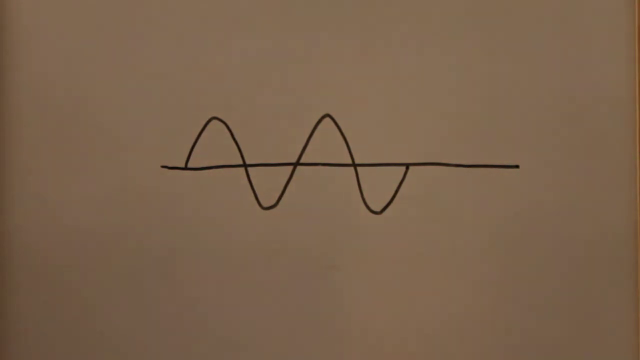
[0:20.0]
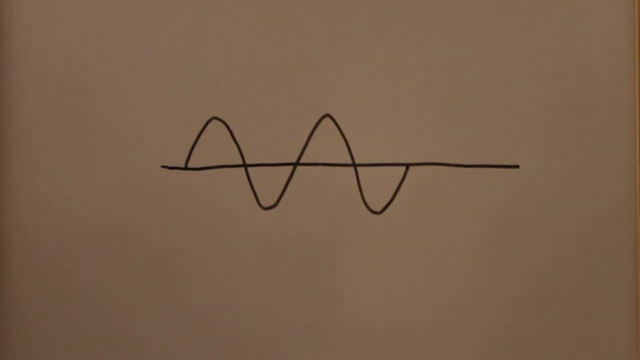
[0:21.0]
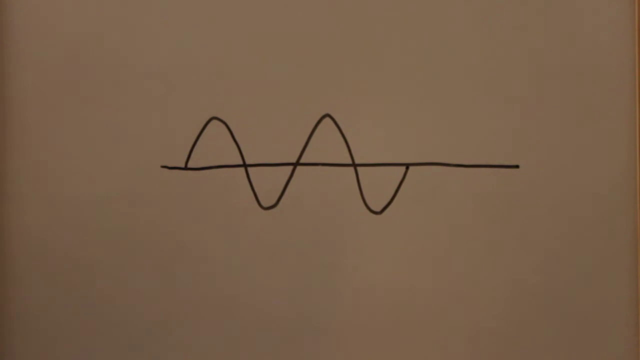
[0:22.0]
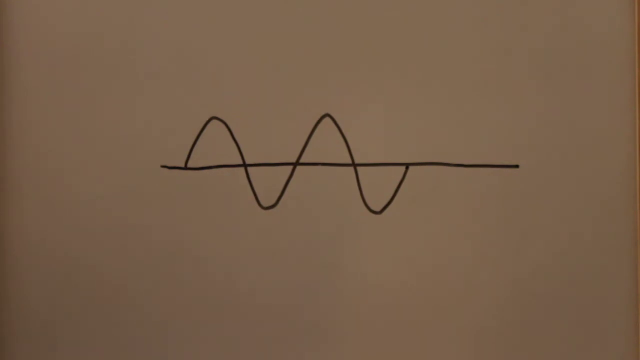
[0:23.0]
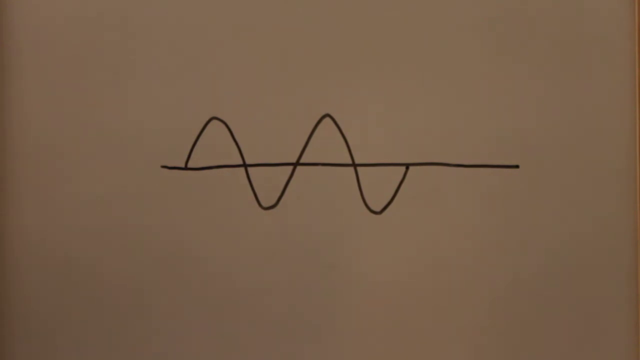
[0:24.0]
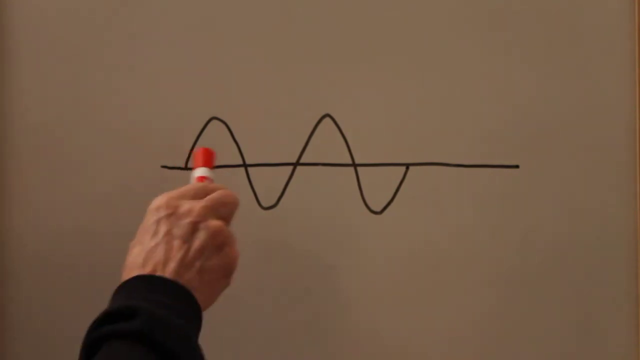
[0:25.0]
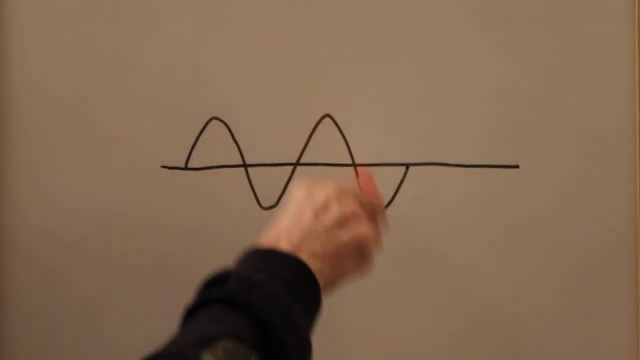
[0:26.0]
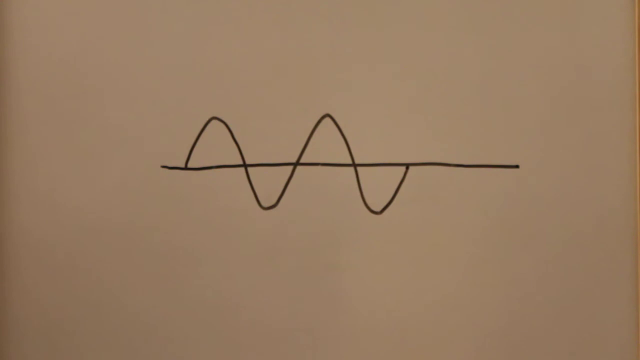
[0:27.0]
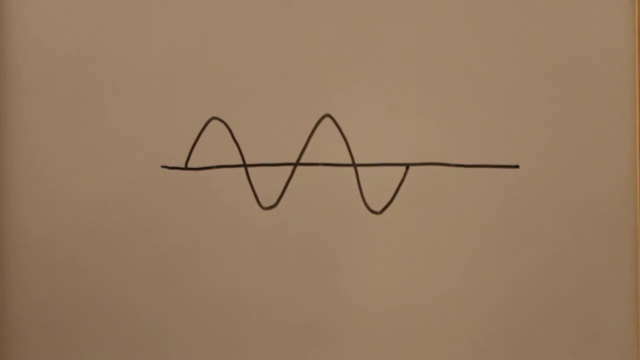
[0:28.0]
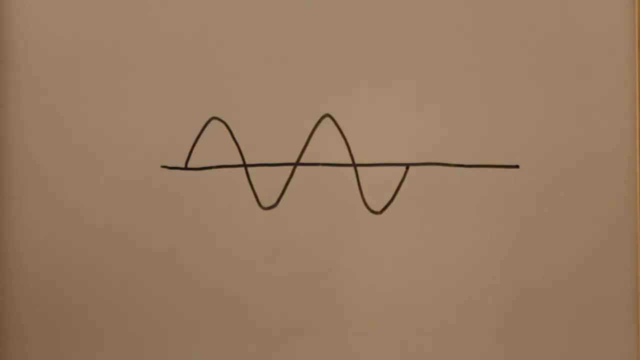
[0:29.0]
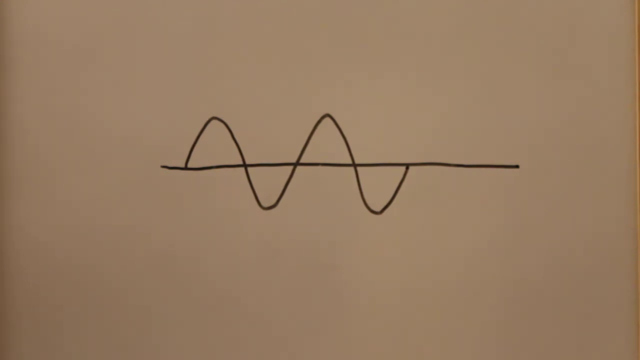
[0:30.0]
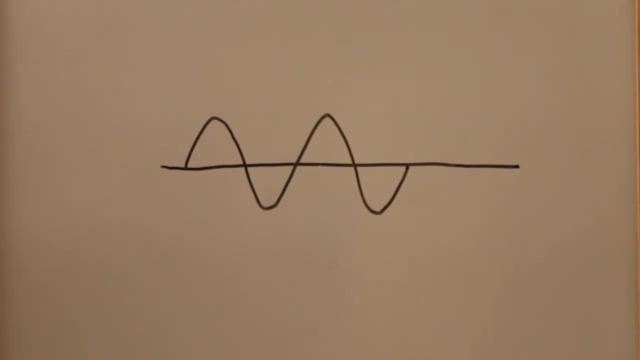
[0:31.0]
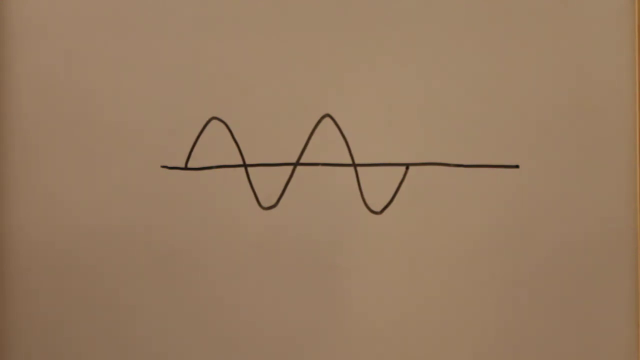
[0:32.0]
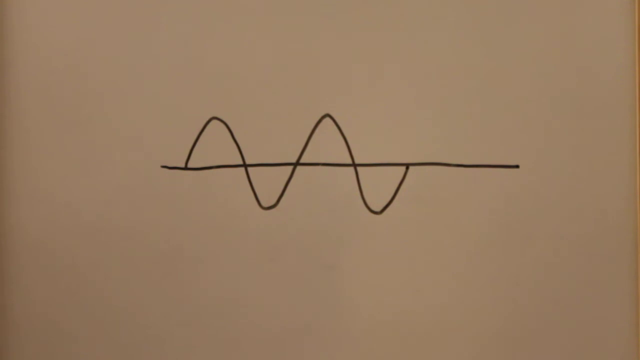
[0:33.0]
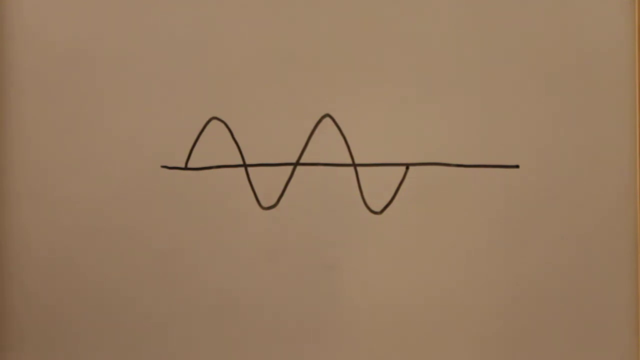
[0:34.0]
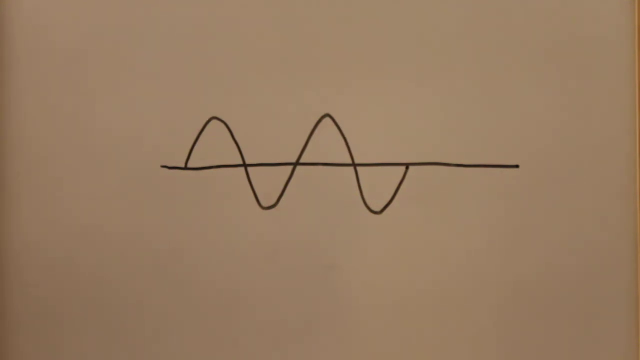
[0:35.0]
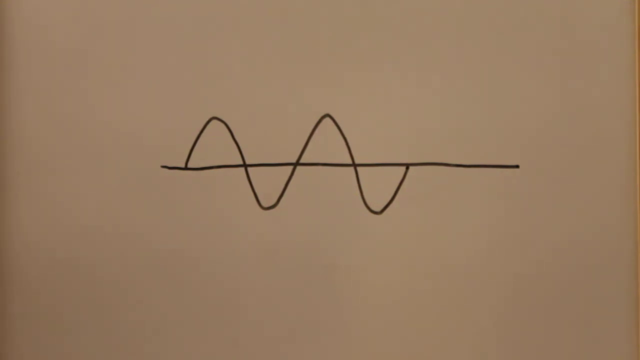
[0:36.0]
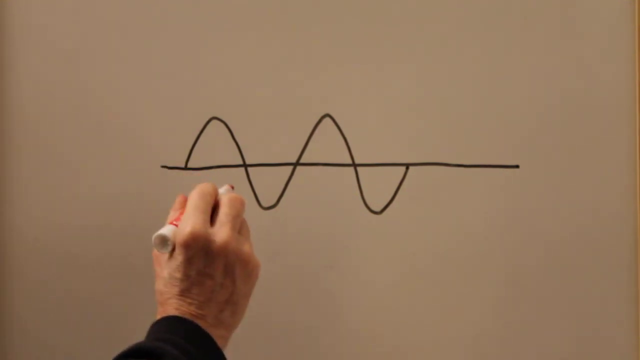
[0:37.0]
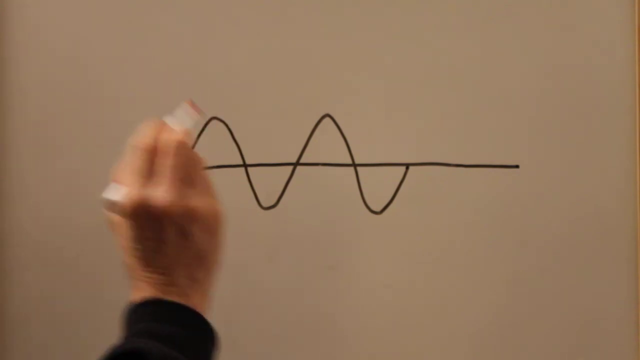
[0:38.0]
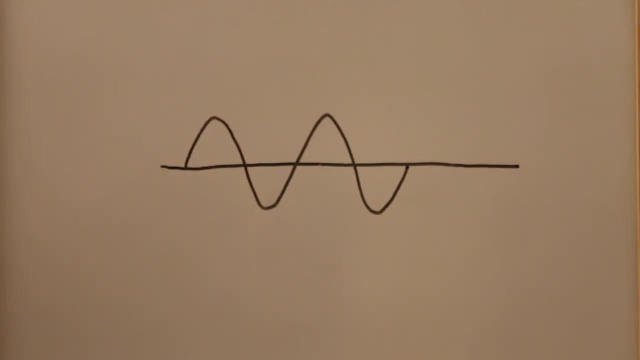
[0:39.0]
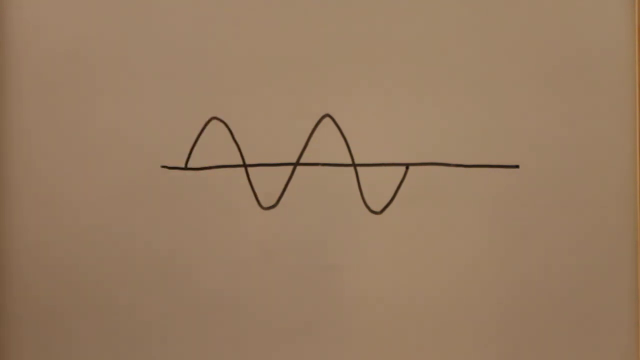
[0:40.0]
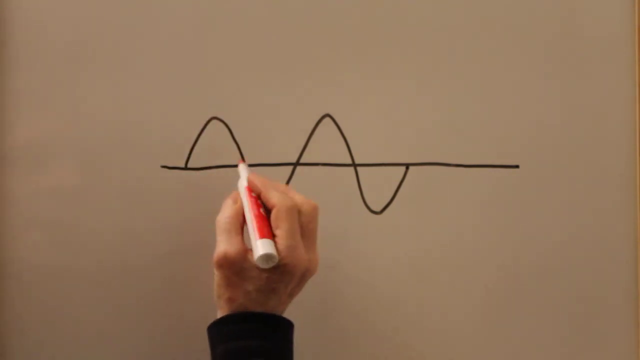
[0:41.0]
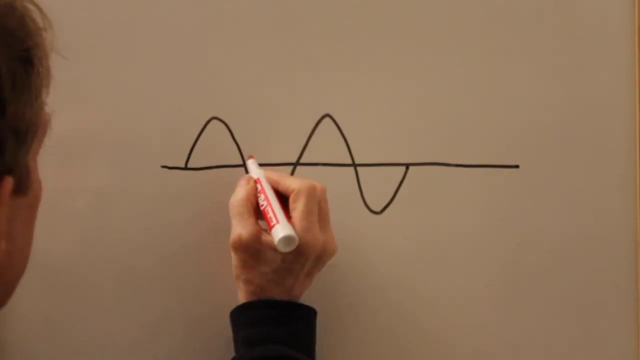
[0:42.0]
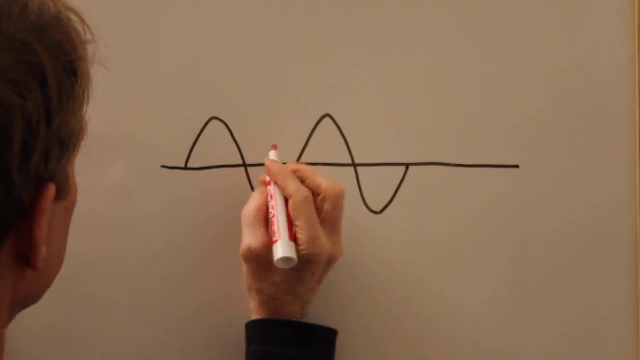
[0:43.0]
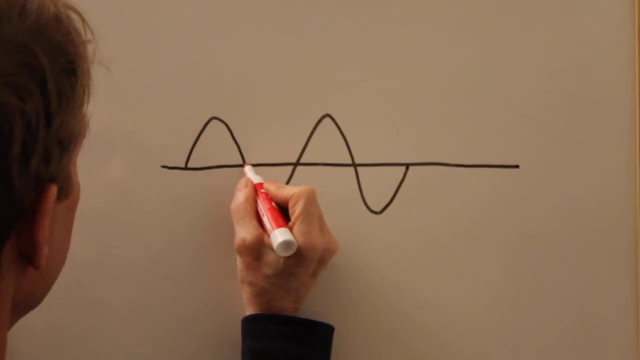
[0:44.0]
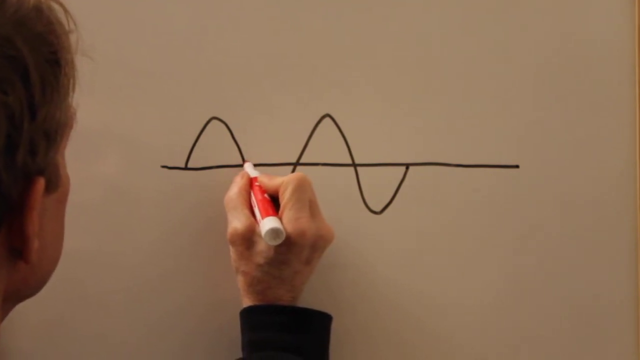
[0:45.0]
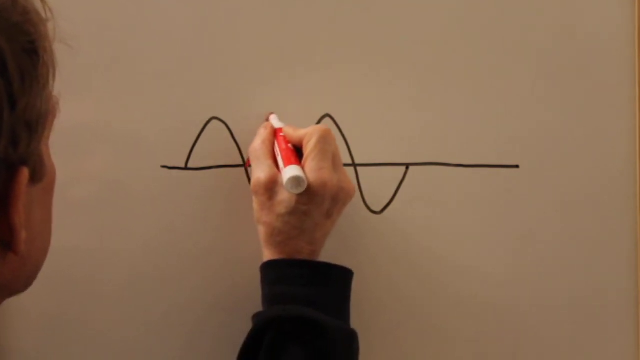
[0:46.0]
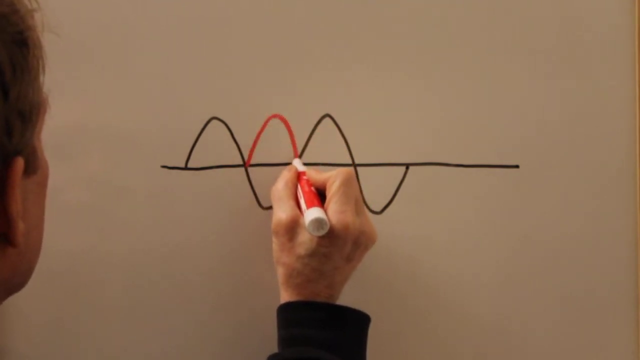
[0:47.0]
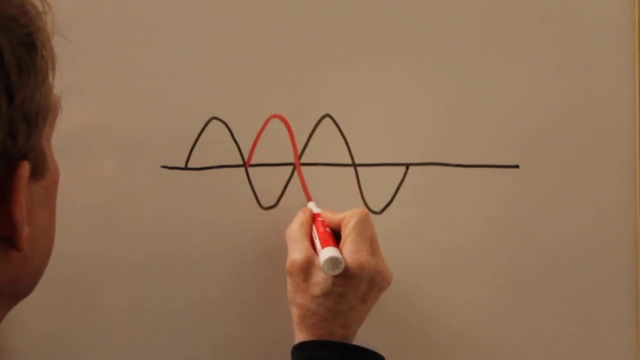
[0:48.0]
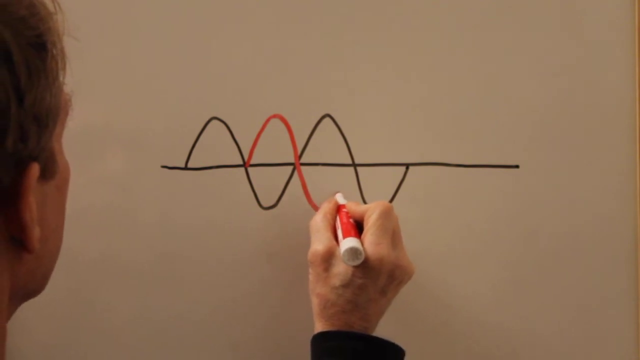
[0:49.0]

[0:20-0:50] A hand comes up into the frame, apparently a right hand, Caucasian, with a long black sleeve that looks like it may be a sweatshirt. It holds a red dry erase marker with the cap on and gestures up to the black line, roughly following the path of the curve. The hand comes back up, now with the cap off the red pen, gestures to the line again, and goes off. Then he comes up to draw, placing the pen at the point where the end of the first black hump meets the horizontal line, and starts there. The red line fills in the gaps rather than following the black up-and-down path: it goes up, intersects down where the black lines intersect, goes below the horizontal line, and goes back up, so it puts a red hump where there was no hump. A tiny bit of the side of his head is visible at the left; he is Caucasian, seems to have light brown hair, and his jaw is moving, apparently as he talks, but little more than his ear can be seen.